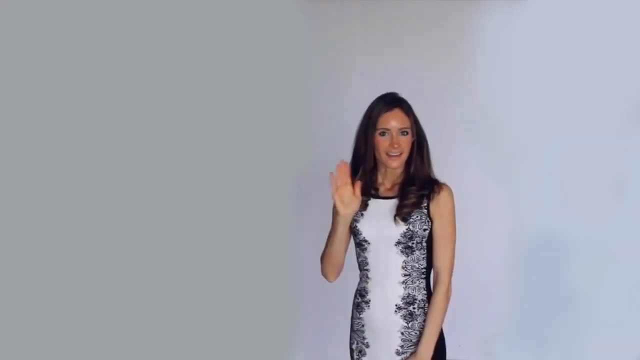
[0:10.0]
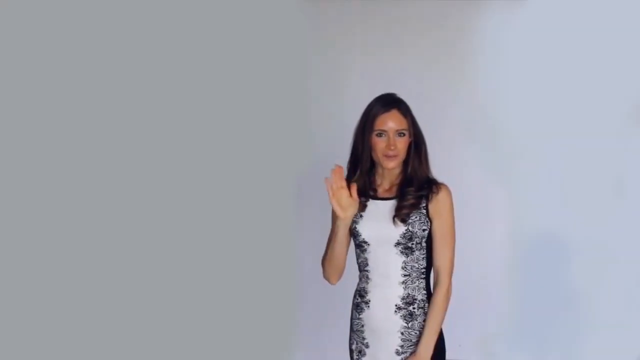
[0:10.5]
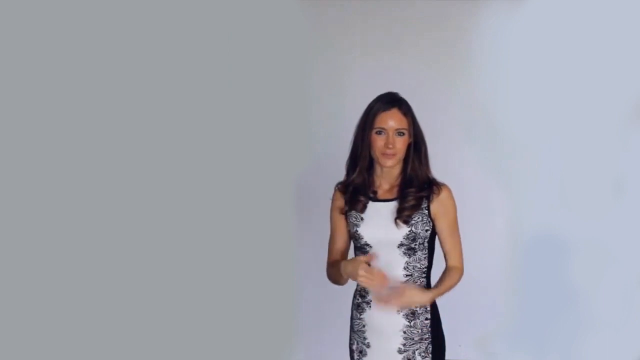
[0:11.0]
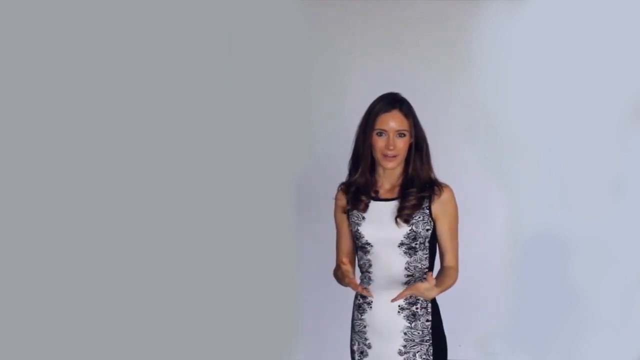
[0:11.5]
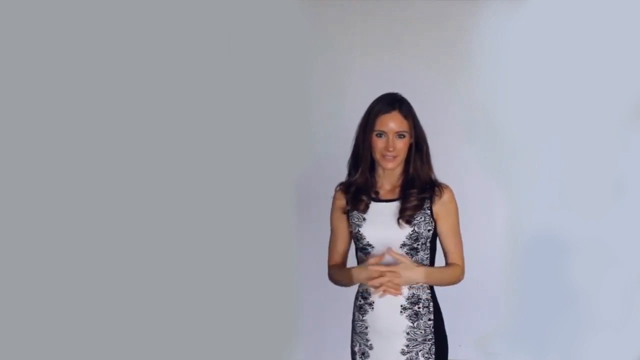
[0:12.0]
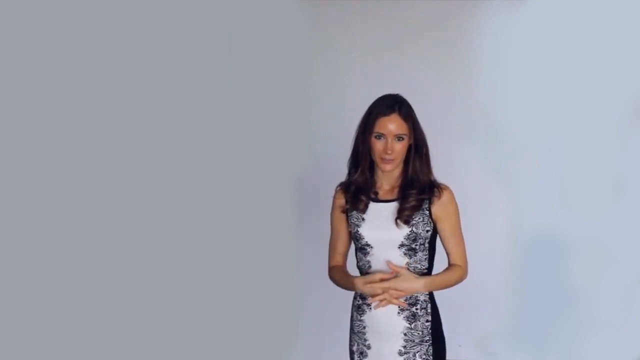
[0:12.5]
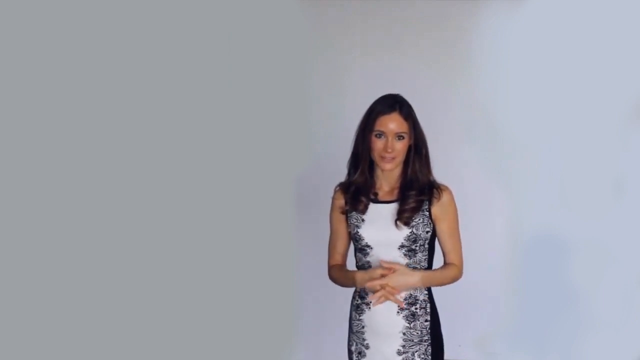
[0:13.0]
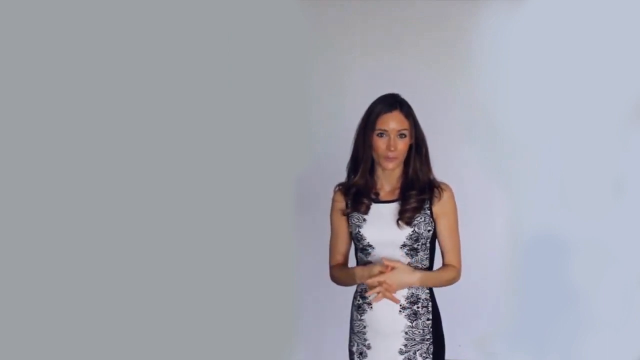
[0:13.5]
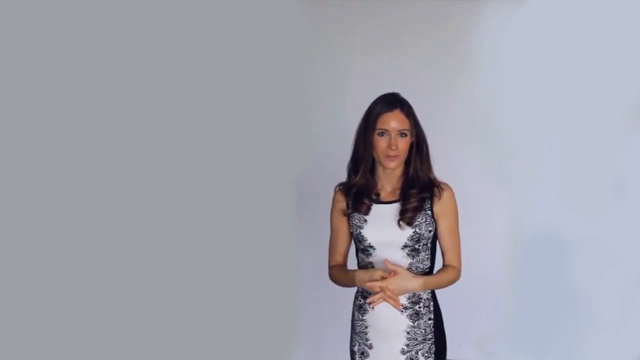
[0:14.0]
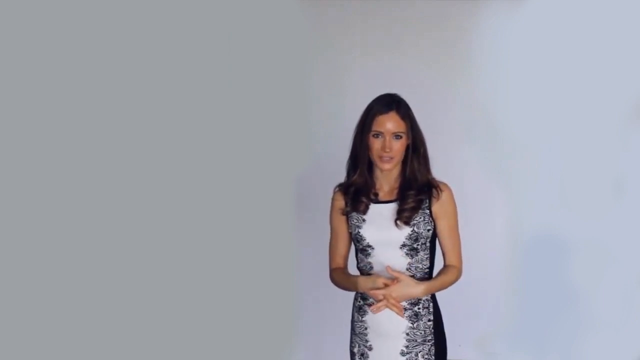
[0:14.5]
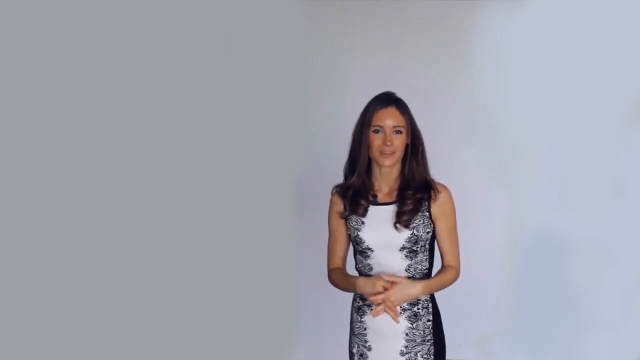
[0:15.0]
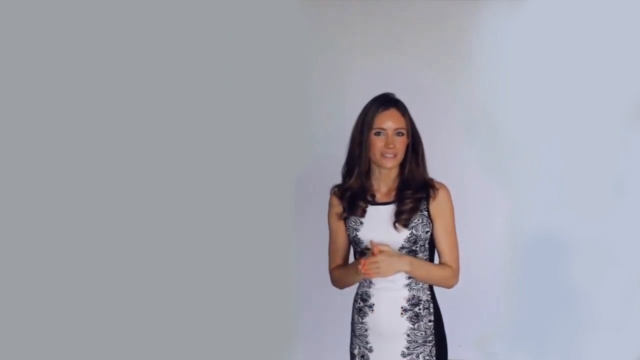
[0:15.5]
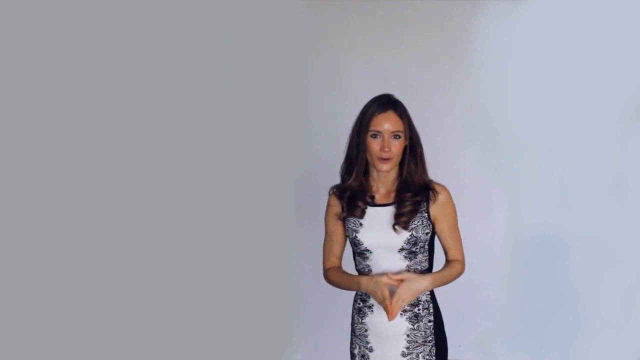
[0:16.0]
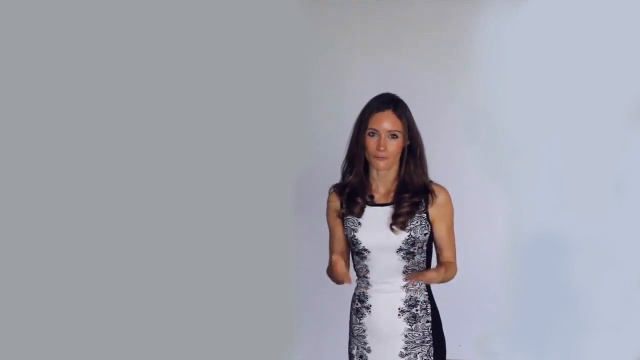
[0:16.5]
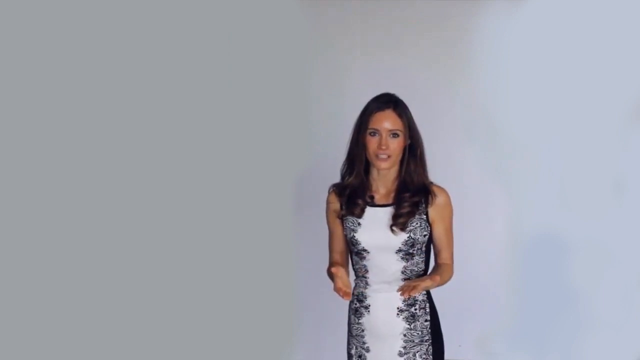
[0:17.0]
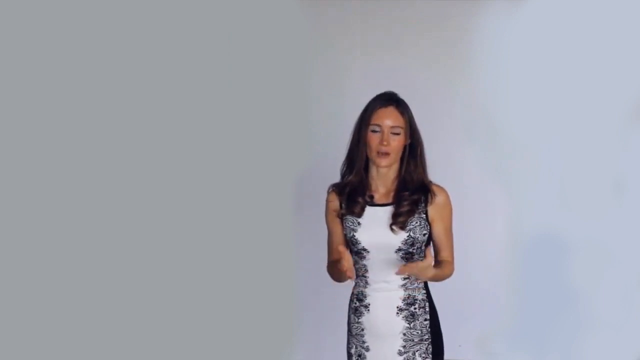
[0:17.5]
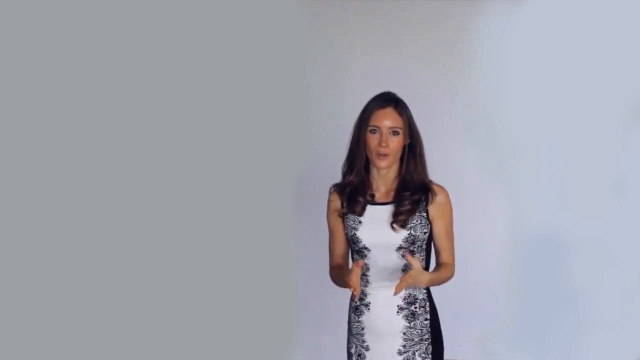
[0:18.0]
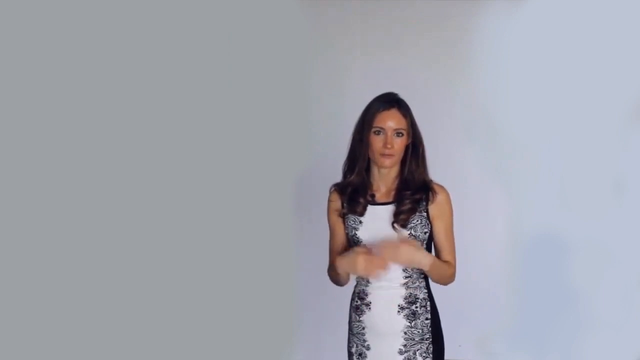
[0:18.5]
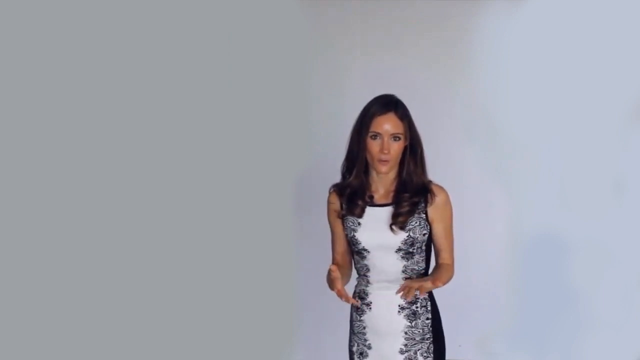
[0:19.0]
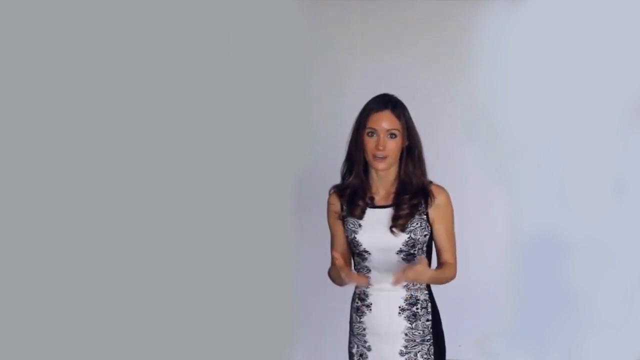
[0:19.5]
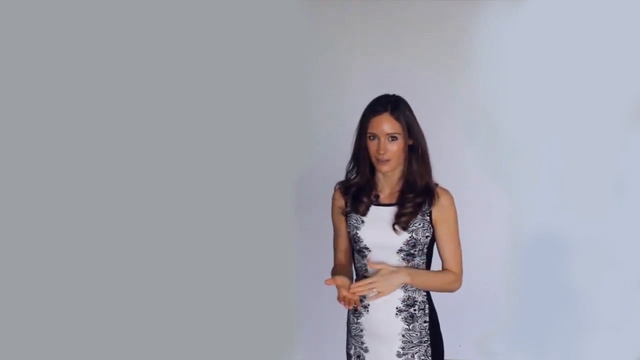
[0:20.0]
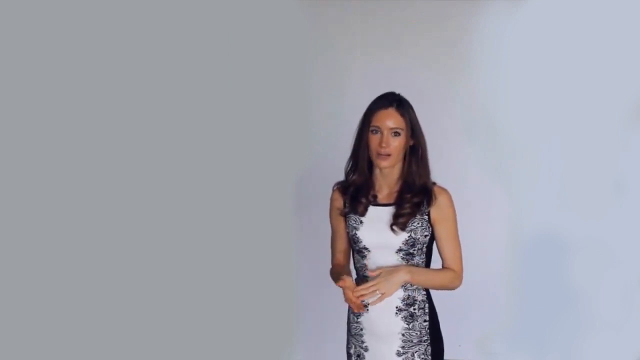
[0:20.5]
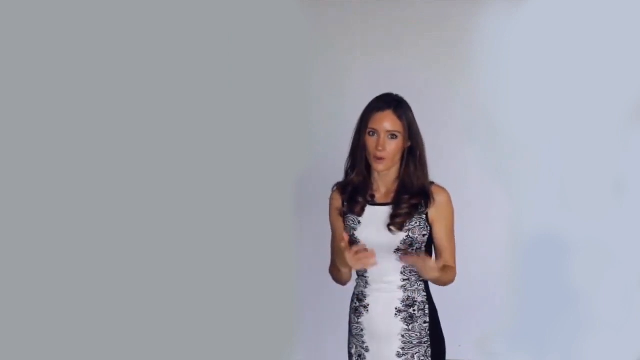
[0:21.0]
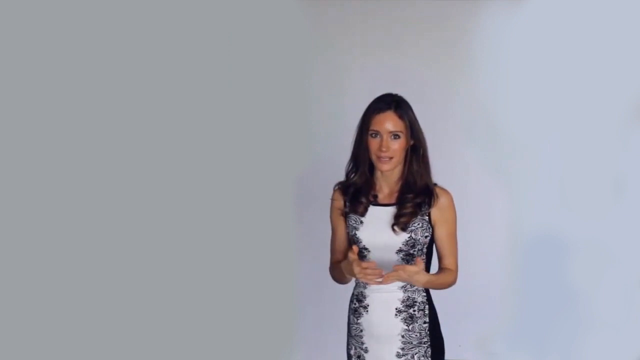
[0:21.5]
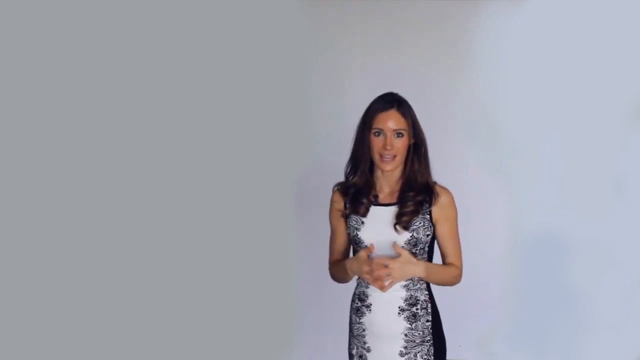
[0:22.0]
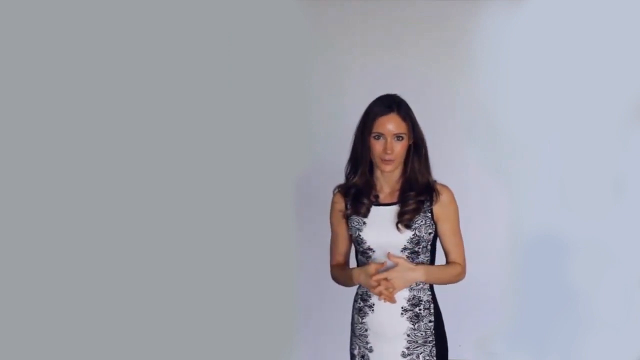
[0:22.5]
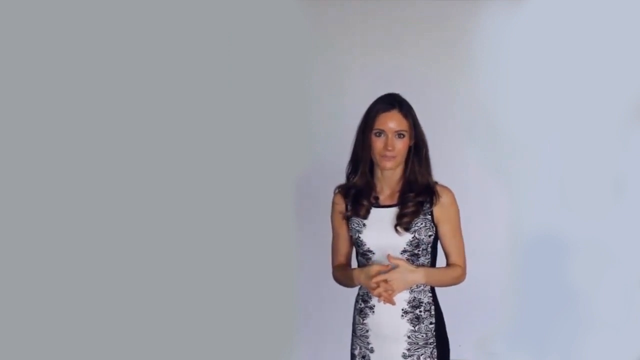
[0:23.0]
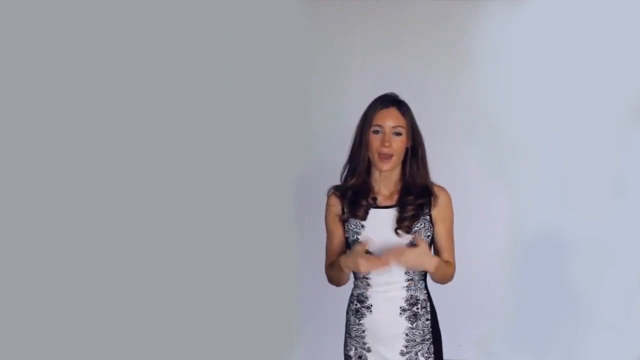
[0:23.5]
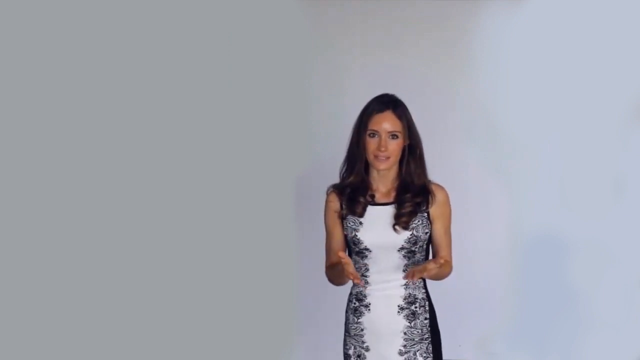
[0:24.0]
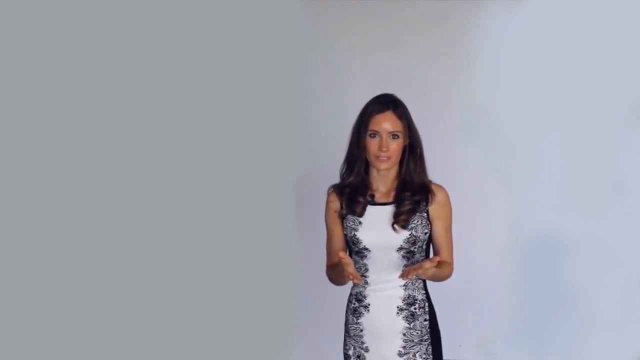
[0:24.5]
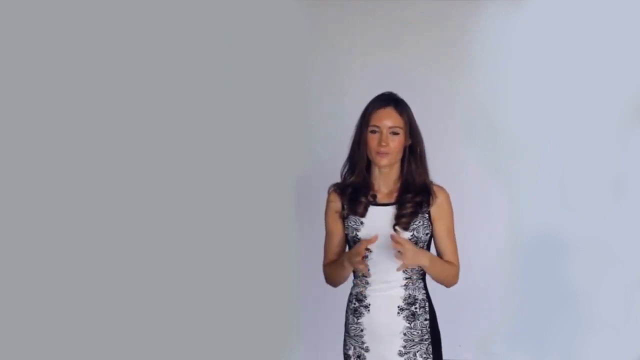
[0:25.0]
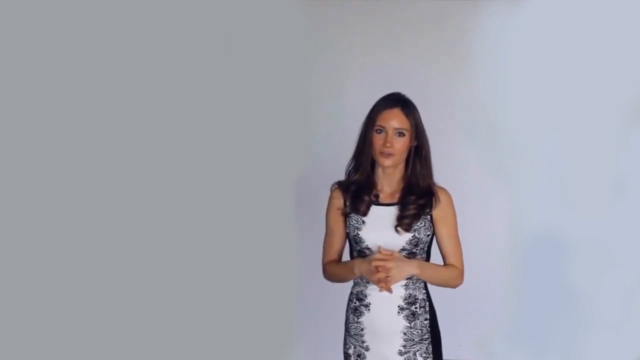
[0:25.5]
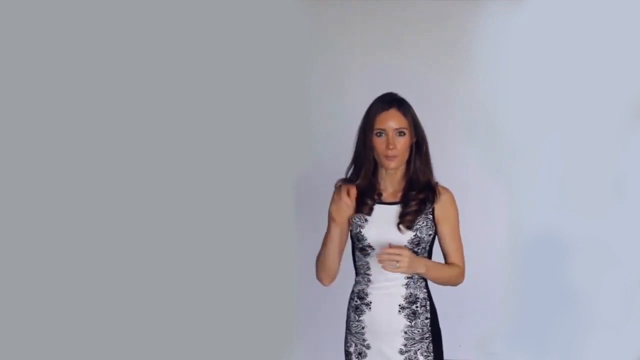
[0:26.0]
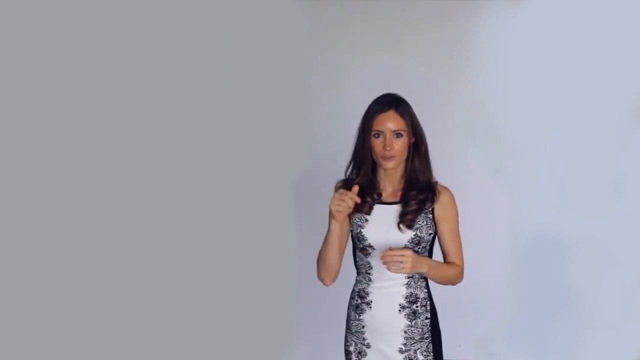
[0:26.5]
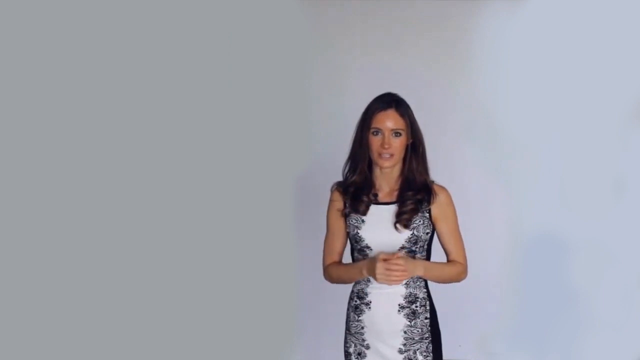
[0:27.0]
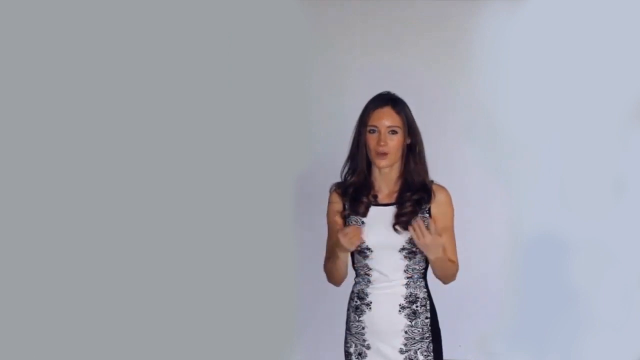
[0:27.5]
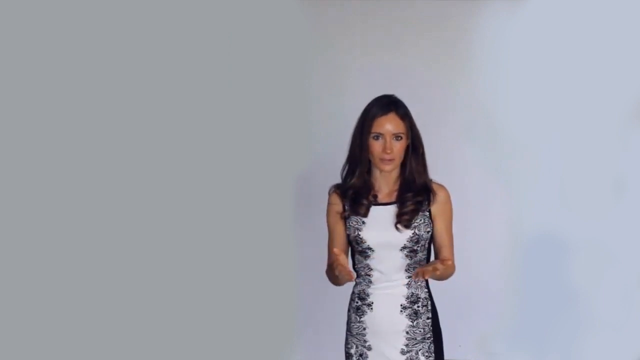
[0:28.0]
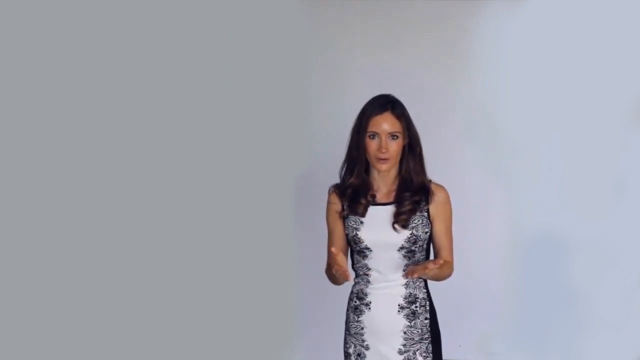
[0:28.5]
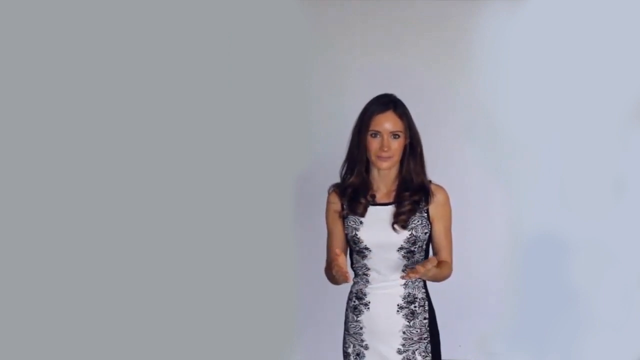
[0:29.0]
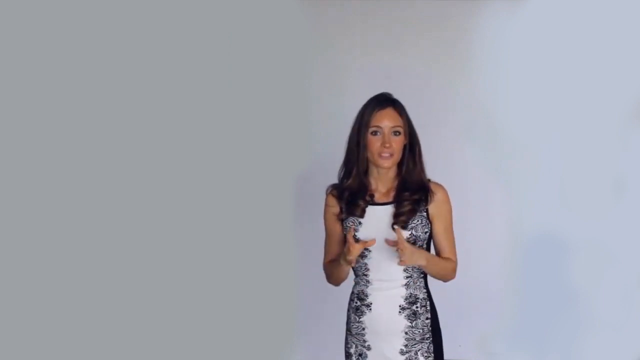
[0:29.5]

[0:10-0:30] Toward the right side of the frame, a woman with dark hair in what looks like a black and white floral dress stands against a plain white background in a long shot. She sort of waves at the camera and speaks, bringing her hands out and then back in toward her stomach while looking at the camera. She keeps talking with her hands moving out and back in, at one point making a gesture pointing down with her hand. Nothing else appears; the whole shot is her speaking against the stark white background. She has thin eyebrows, thin hair with soft curls at the ends, somewhat heavy eye makeup, and a slightly shiny forehead.